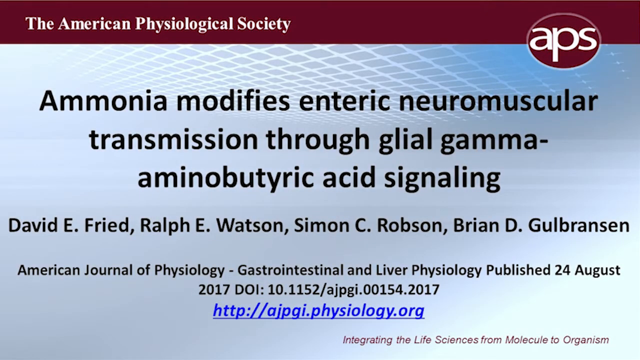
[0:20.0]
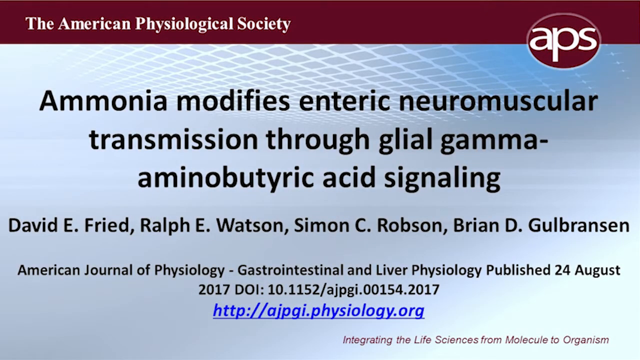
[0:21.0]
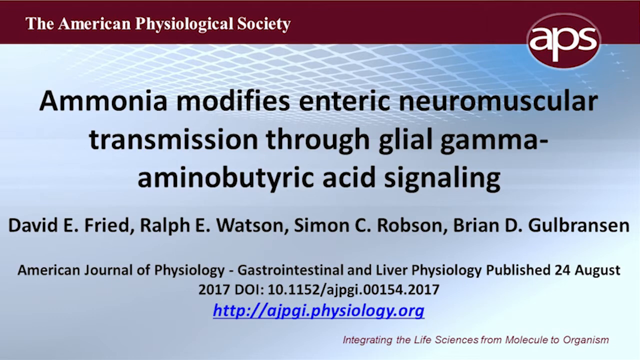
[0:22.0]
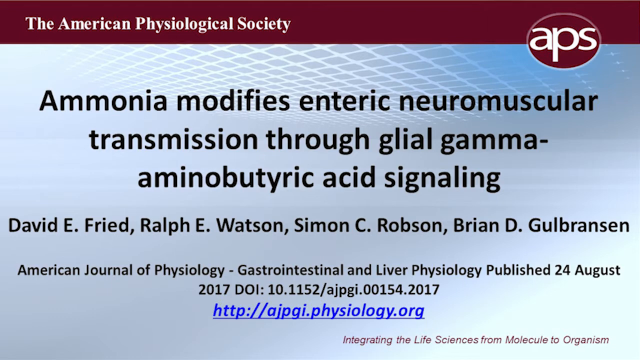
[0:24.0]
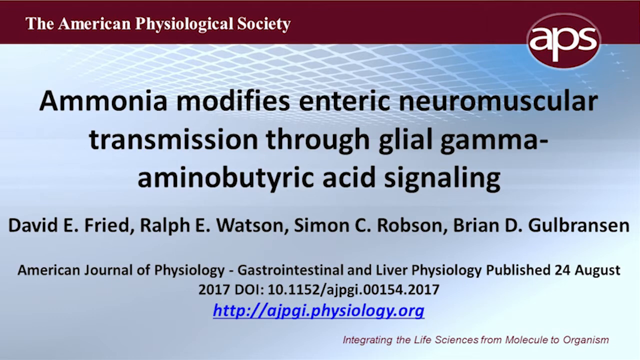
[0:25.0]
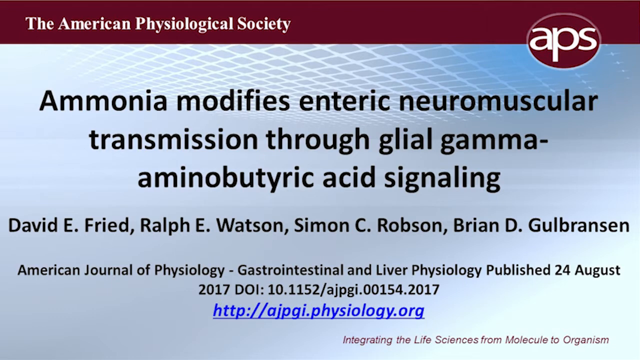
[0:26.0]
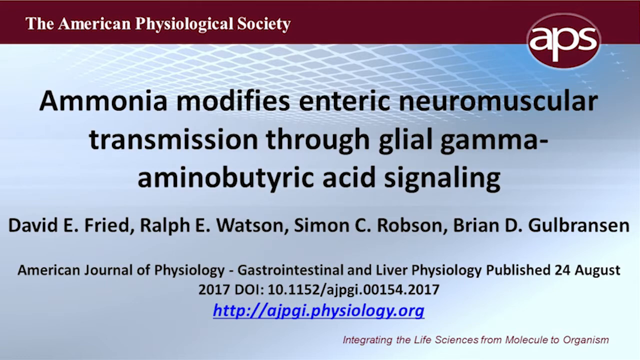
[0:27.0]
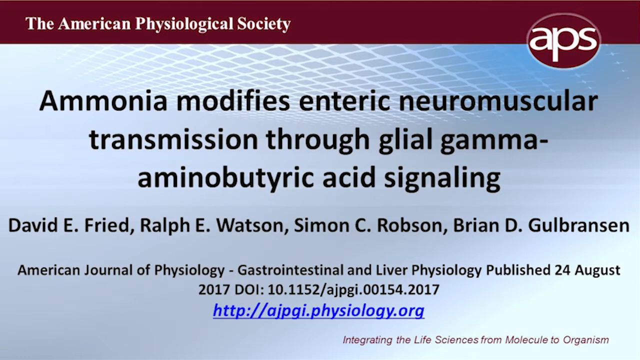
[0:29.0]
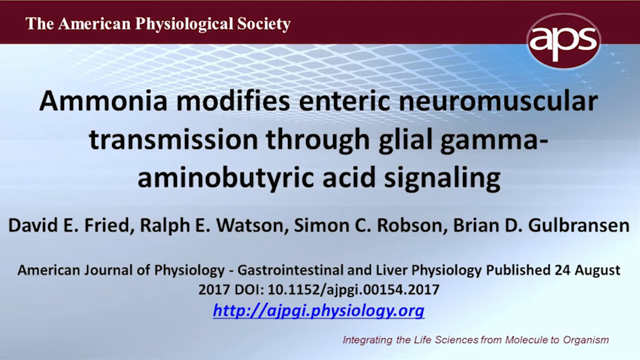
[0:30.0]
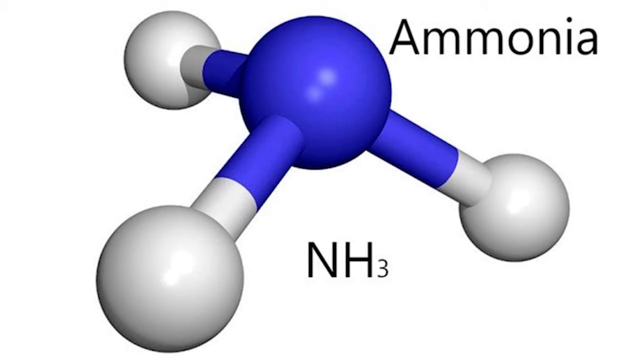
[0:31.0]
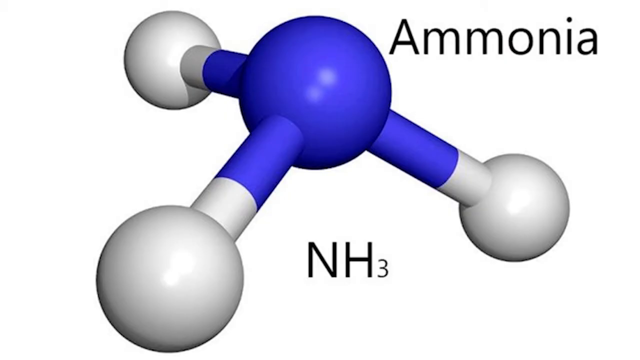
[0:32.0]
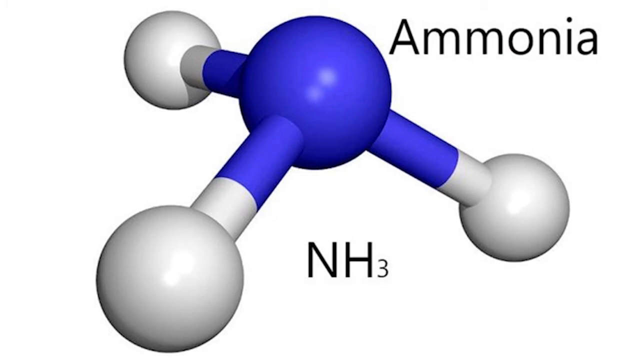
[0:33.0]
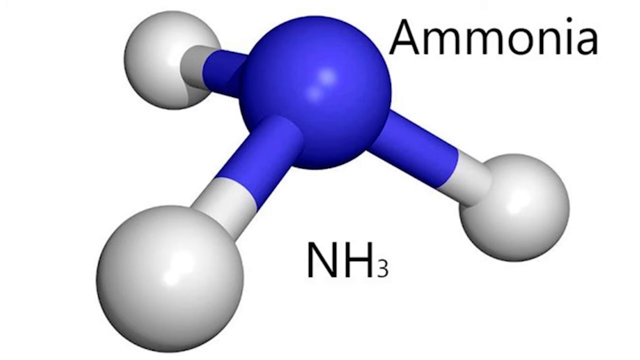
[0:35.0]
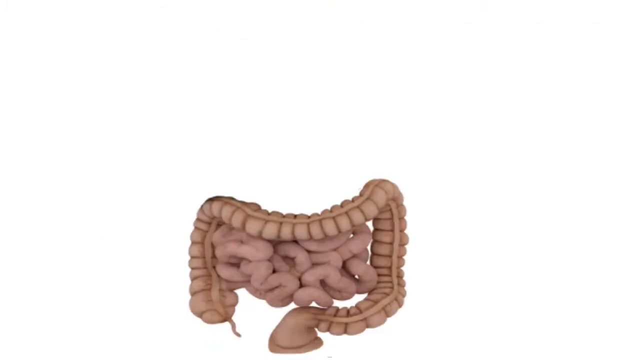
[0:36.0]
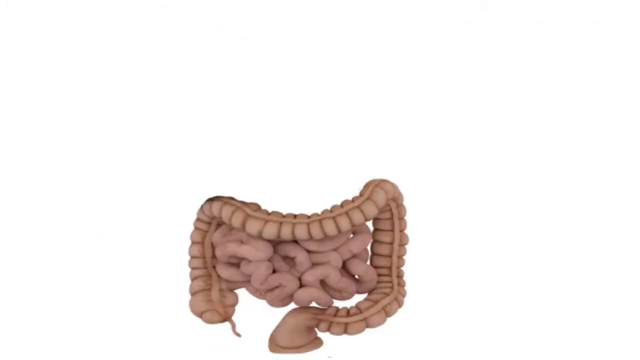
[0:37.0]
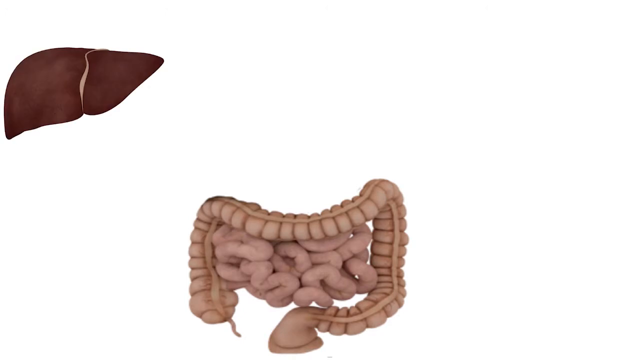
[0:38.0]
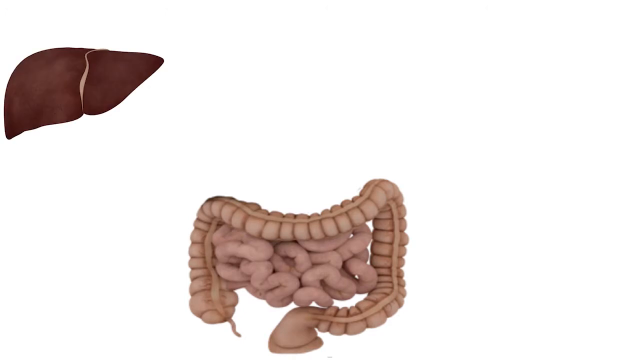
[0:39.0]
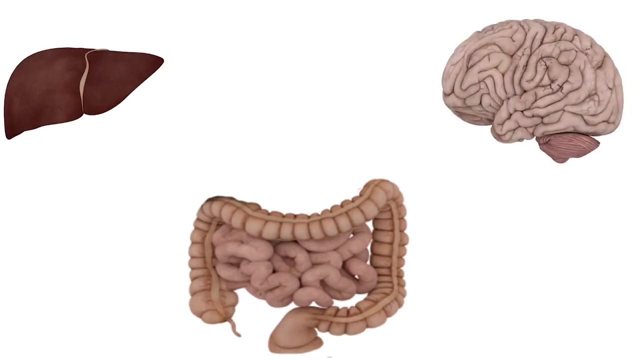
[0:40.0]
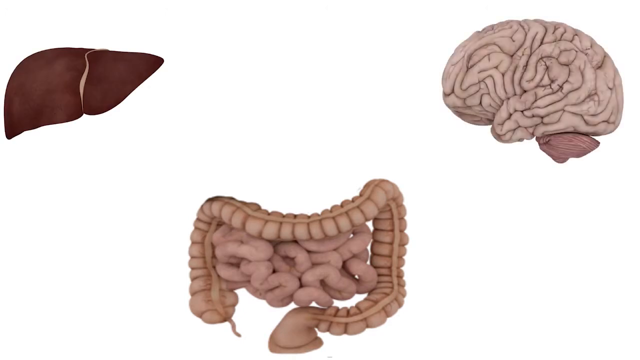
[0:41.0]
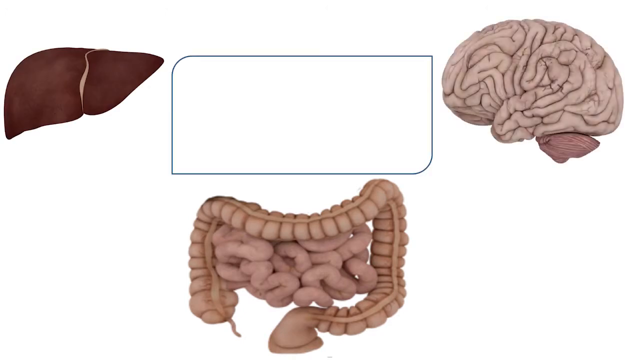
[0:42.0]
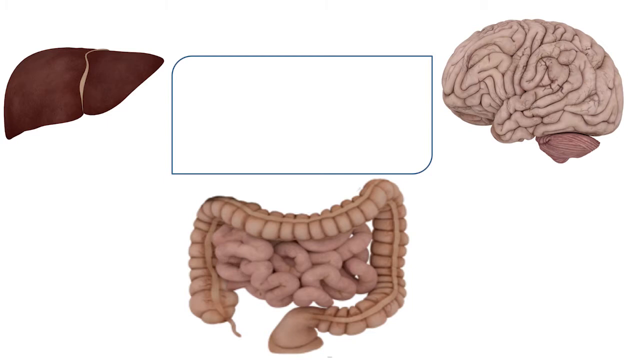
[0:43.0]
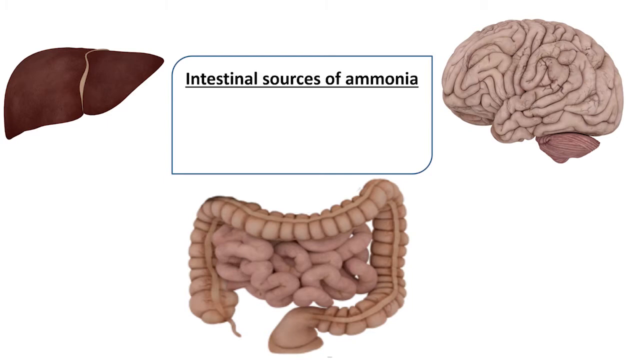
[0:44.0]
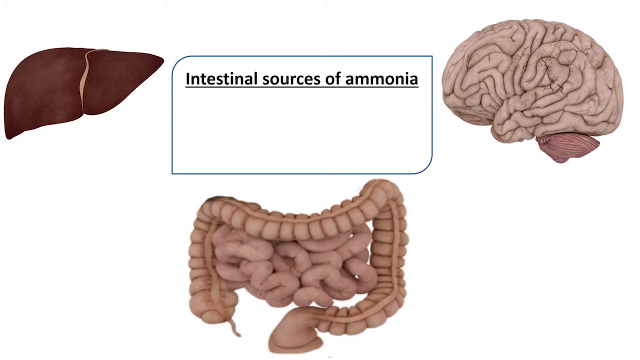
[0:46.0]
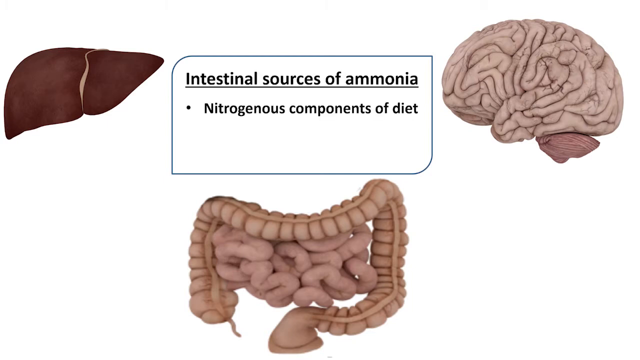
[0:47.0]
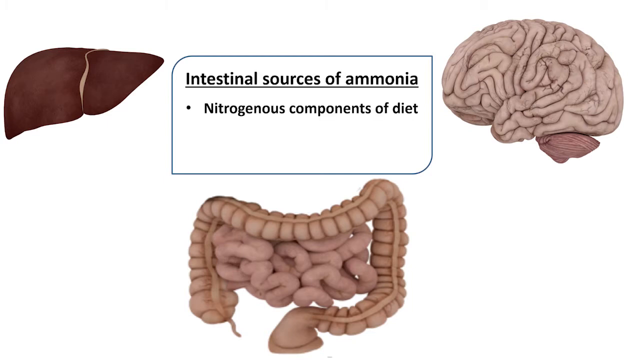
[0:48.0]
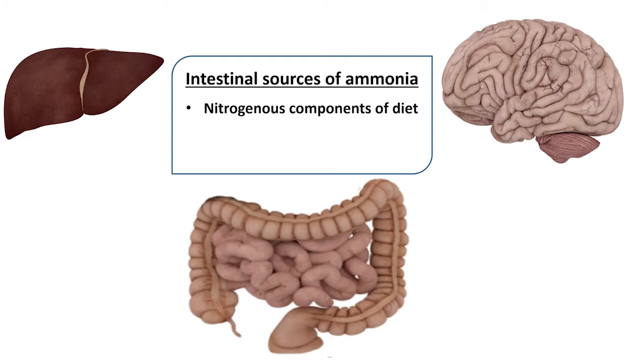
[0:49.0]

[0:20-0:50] A title page from the American Physiological Society, or APS, shows the title "ammonia modifies enteric neuromuscular transmission through glial gamma amino butyric acid signaling." The scientists involved are listed as David E. Fryde, Ralph E. Watson, Simon C. Robson and Brian D. Gulbranson. It is from the American Journal of Physiology Gastrointestinal and Liver Physiology, published the 24th of August 2017. The title page, which has a blue background, switches to a graphic of a molecule of ammonia, labelled "NH3", showing four electrons joined together by blue and white legs. The view then switches to a picture of body parts, with what seem to be the intestines at the bottom of the page and a brain on the right-hand side. Words read "Intestinal sources of ammonia, nitrogenous components of diet."